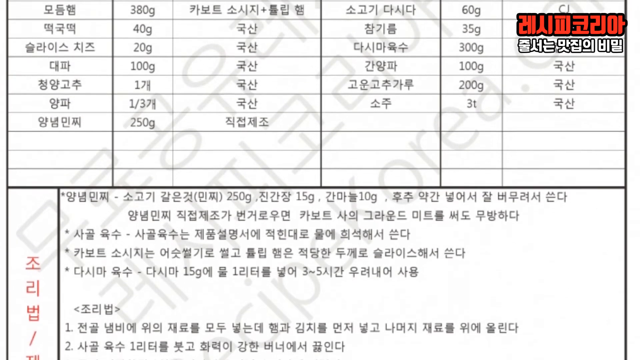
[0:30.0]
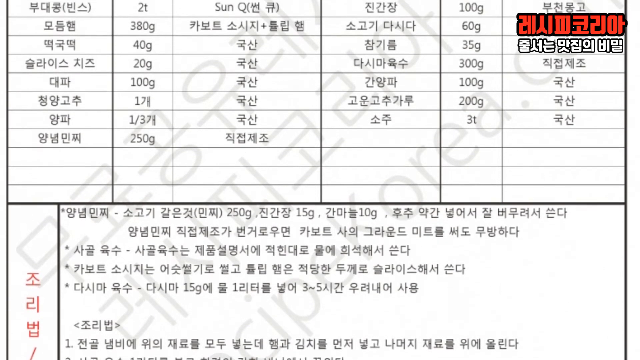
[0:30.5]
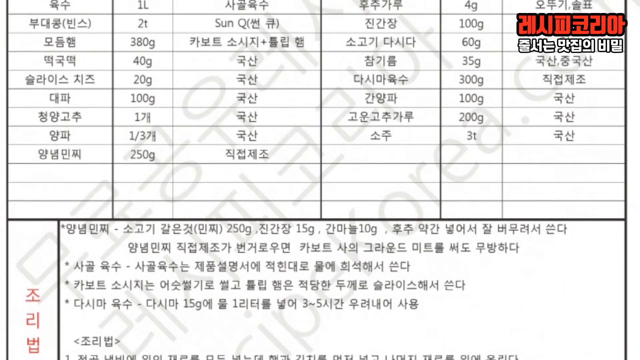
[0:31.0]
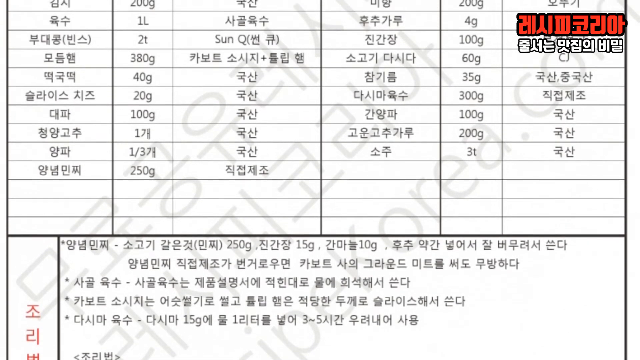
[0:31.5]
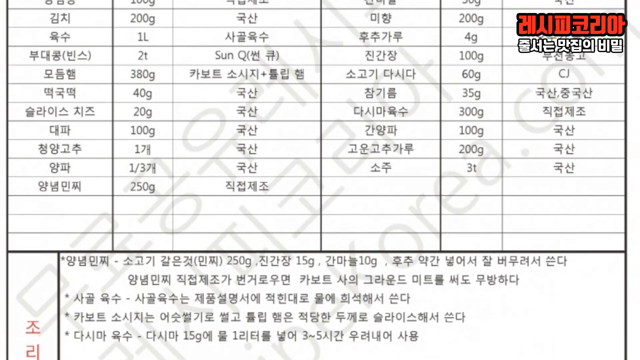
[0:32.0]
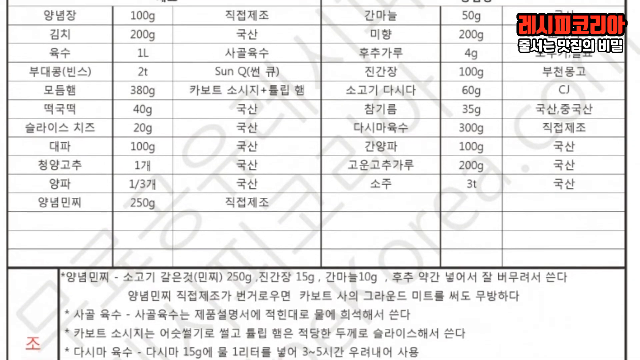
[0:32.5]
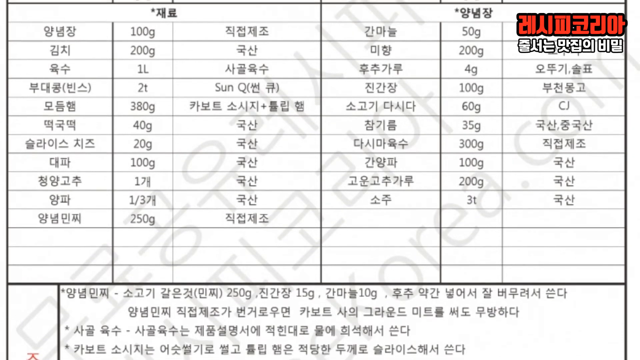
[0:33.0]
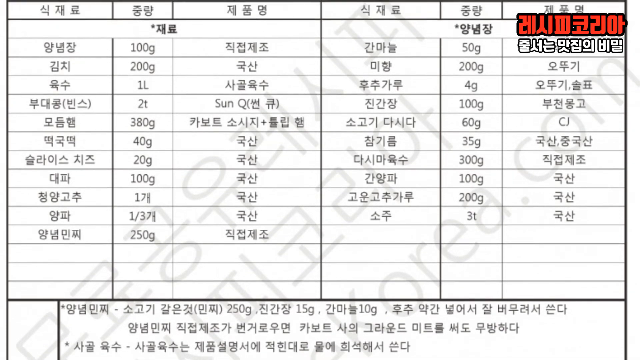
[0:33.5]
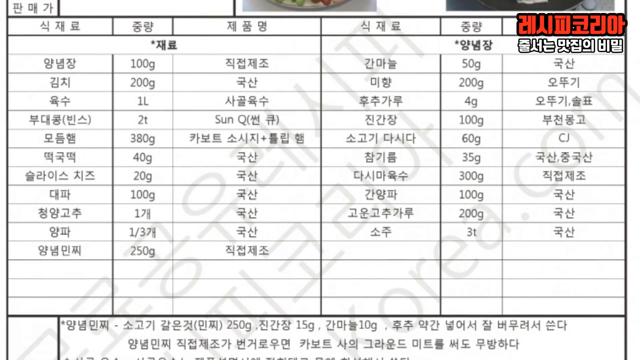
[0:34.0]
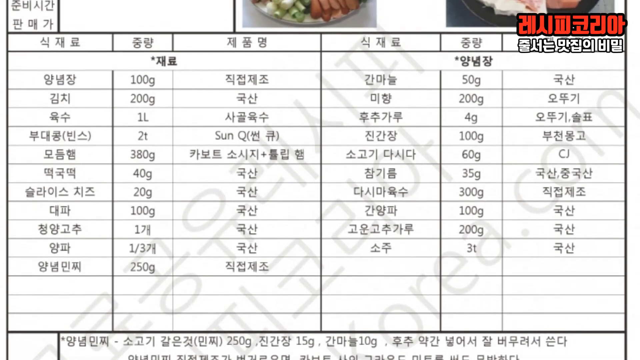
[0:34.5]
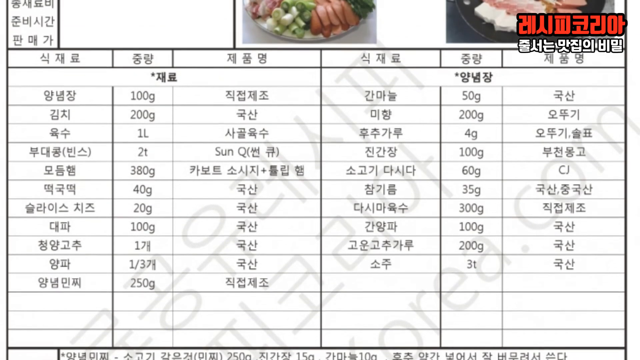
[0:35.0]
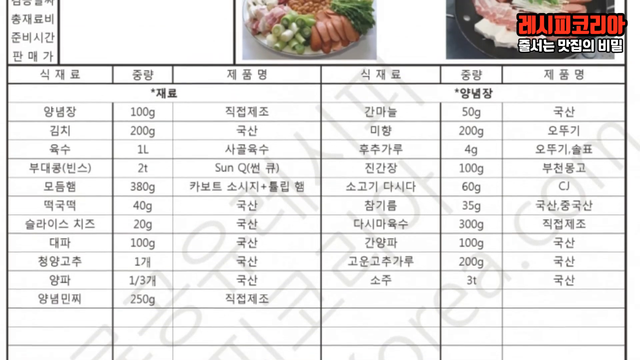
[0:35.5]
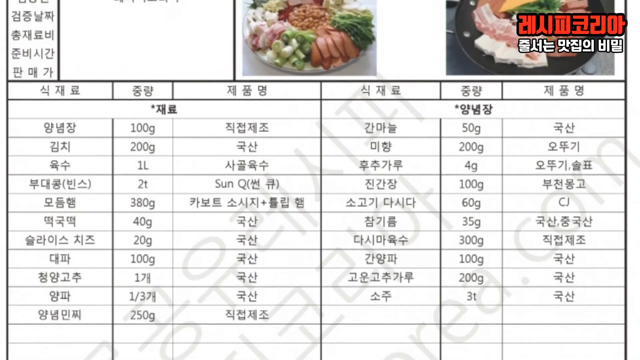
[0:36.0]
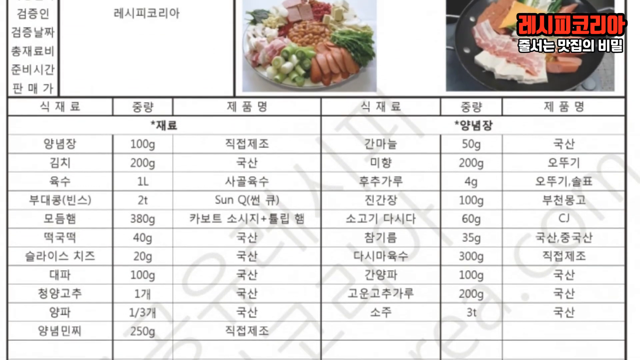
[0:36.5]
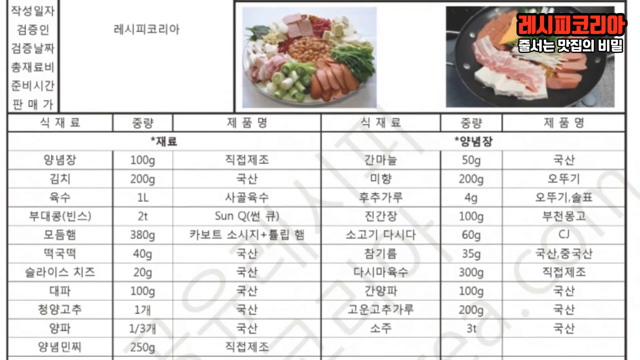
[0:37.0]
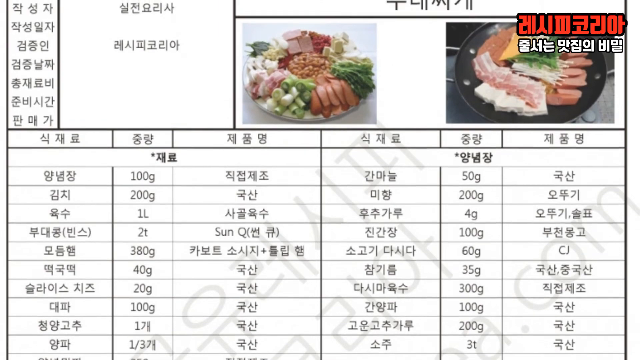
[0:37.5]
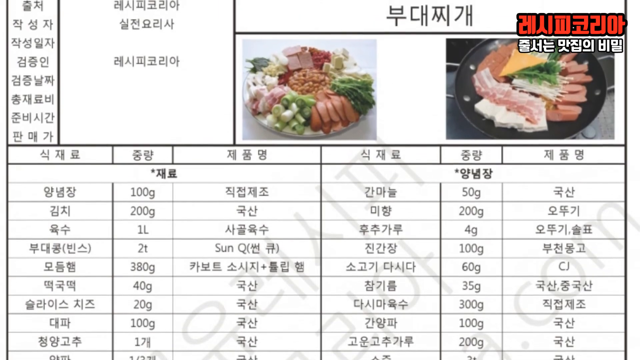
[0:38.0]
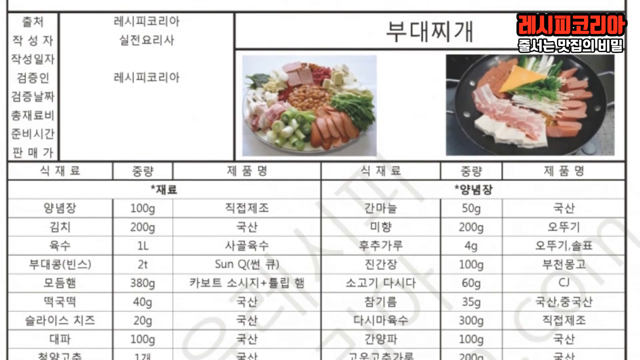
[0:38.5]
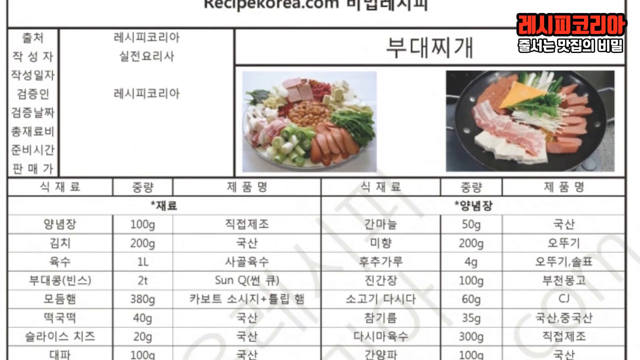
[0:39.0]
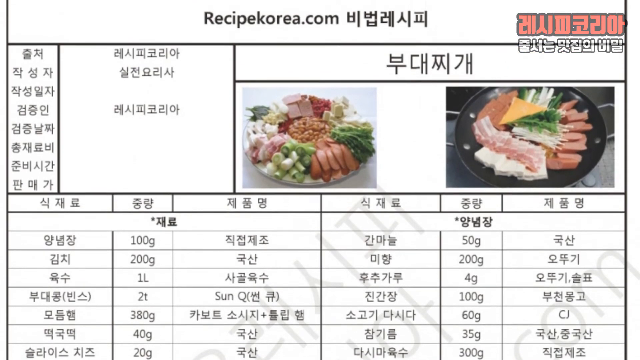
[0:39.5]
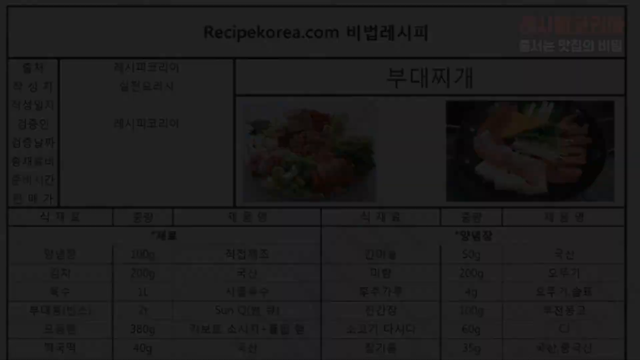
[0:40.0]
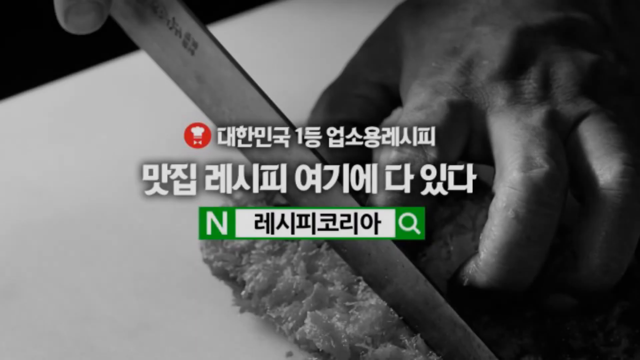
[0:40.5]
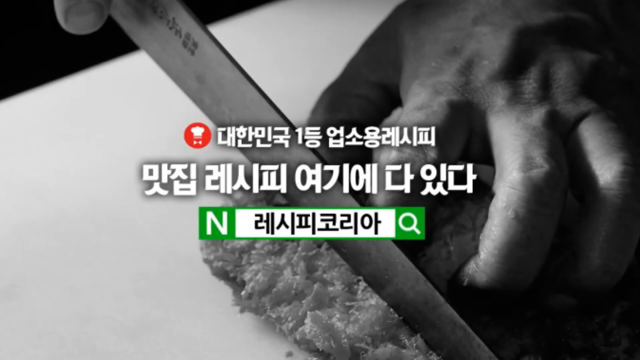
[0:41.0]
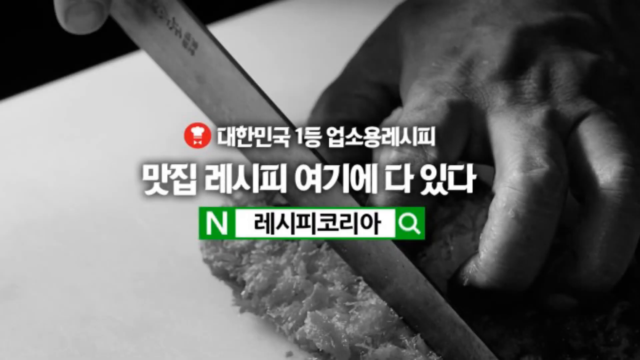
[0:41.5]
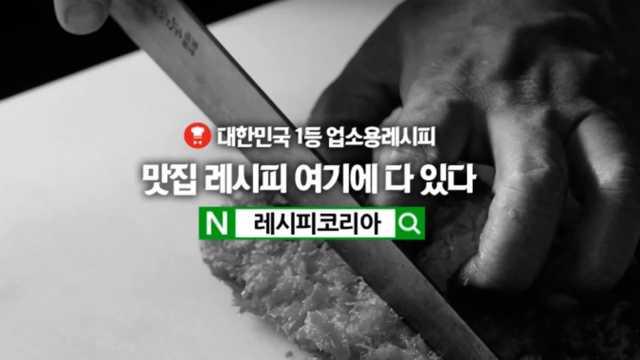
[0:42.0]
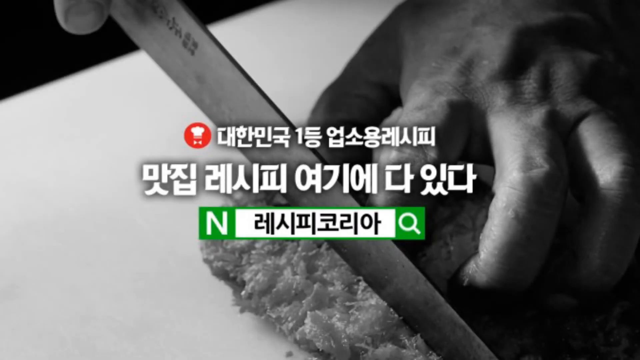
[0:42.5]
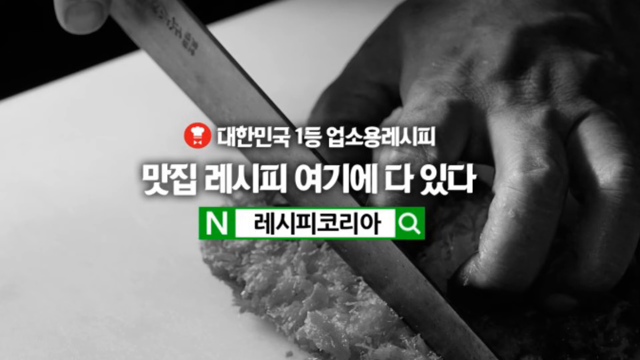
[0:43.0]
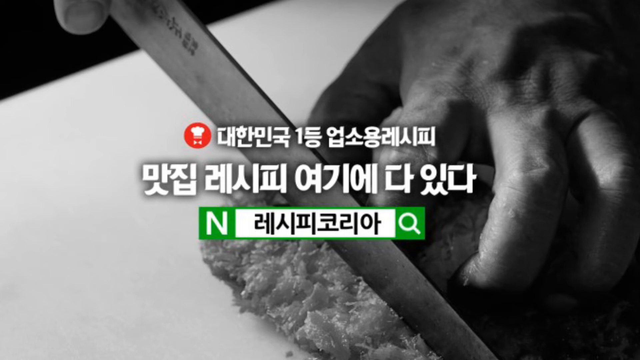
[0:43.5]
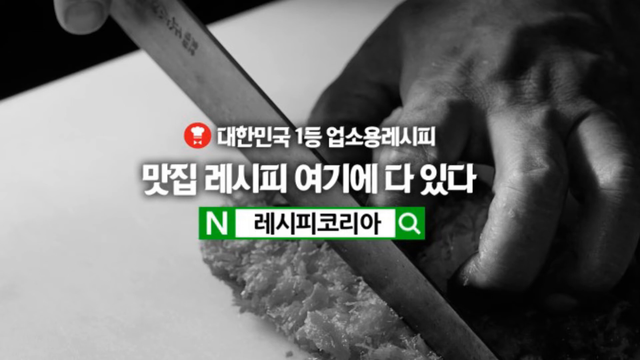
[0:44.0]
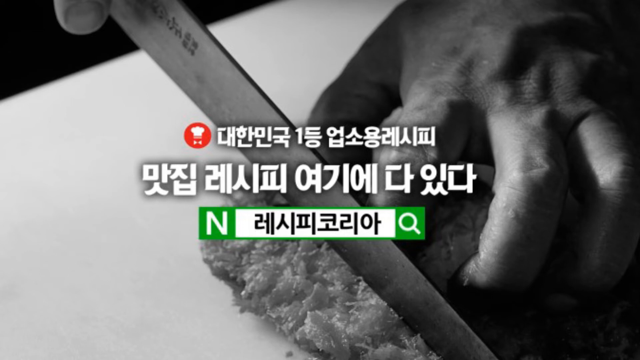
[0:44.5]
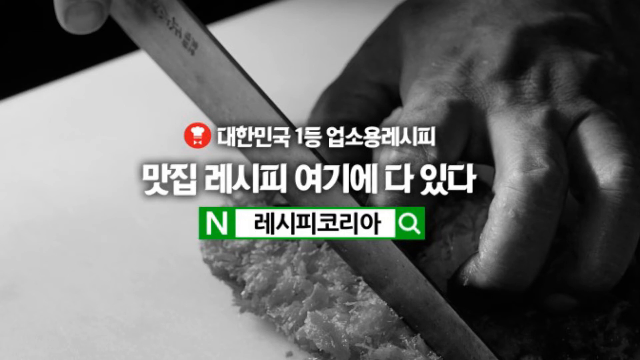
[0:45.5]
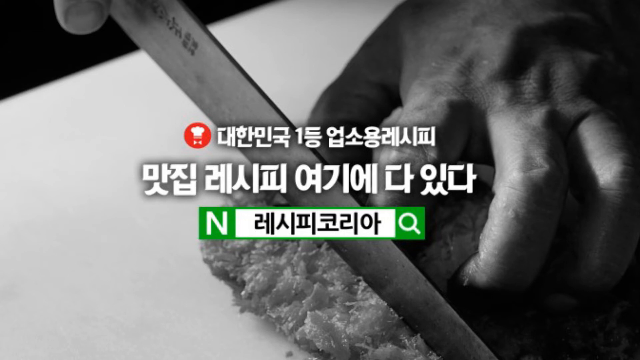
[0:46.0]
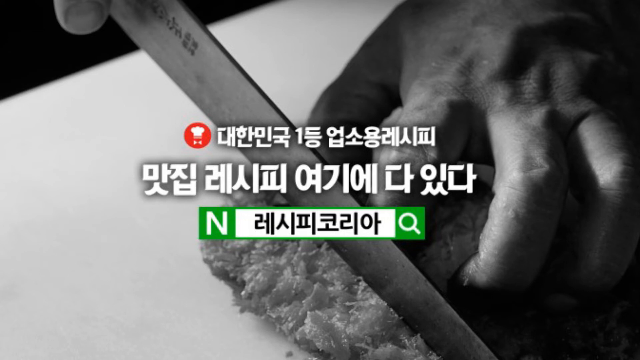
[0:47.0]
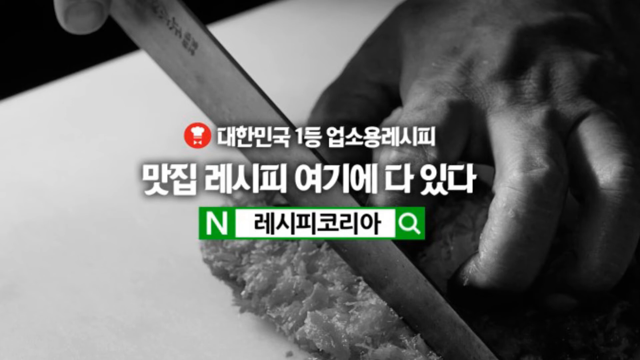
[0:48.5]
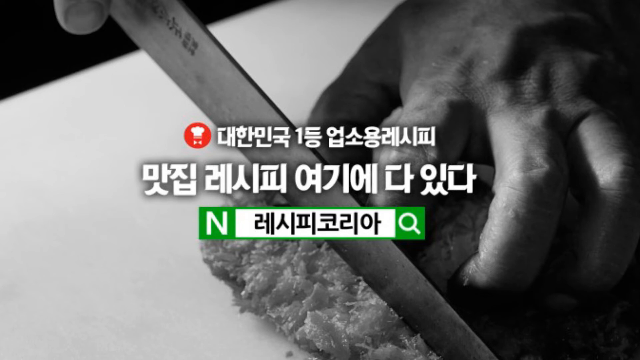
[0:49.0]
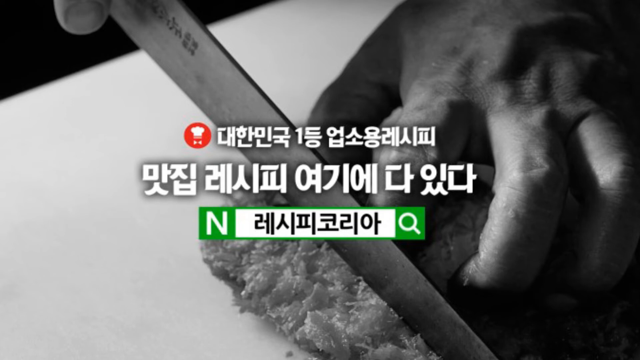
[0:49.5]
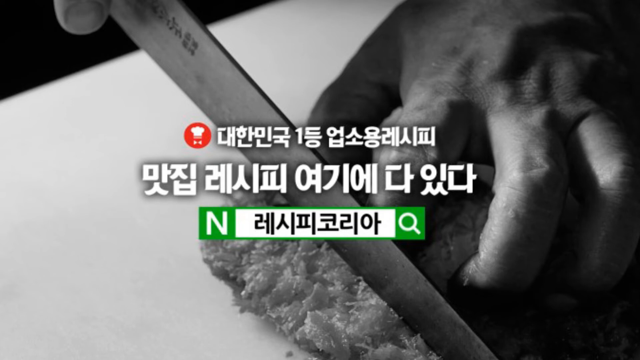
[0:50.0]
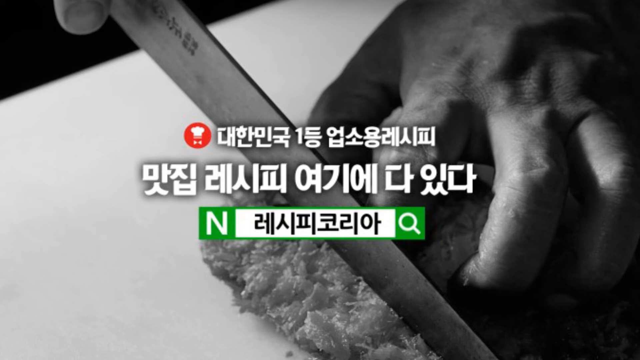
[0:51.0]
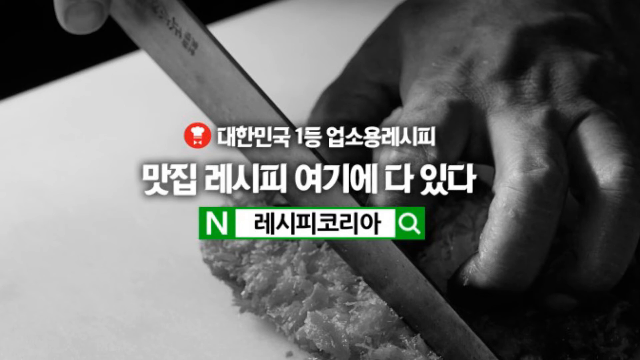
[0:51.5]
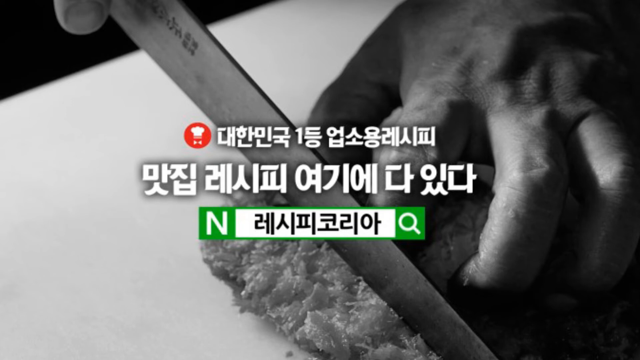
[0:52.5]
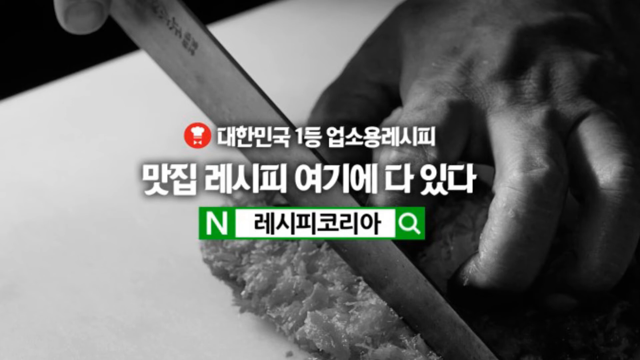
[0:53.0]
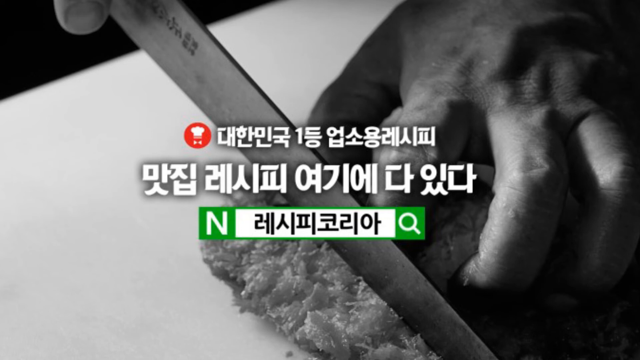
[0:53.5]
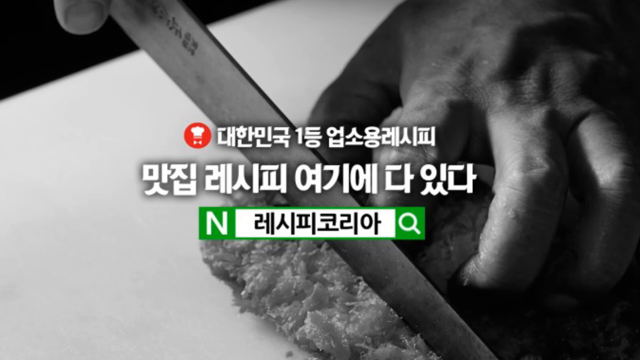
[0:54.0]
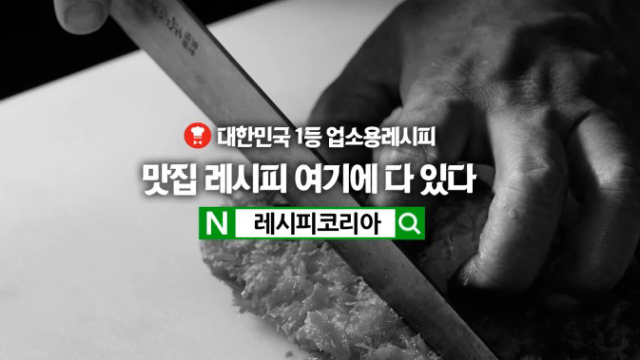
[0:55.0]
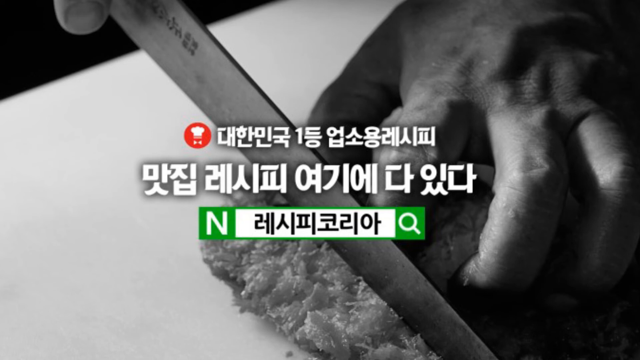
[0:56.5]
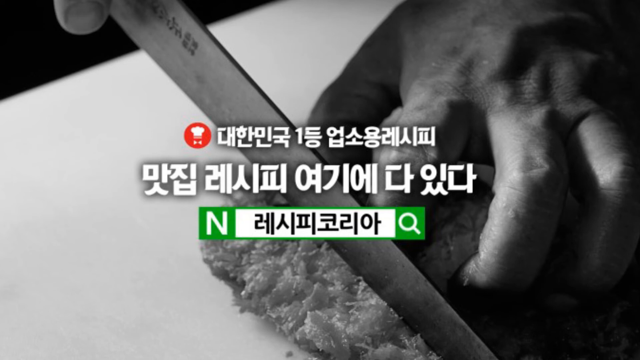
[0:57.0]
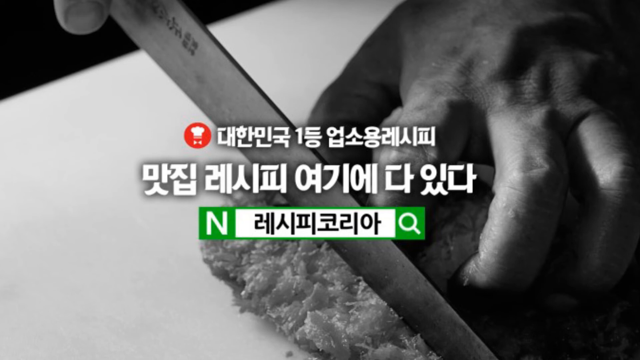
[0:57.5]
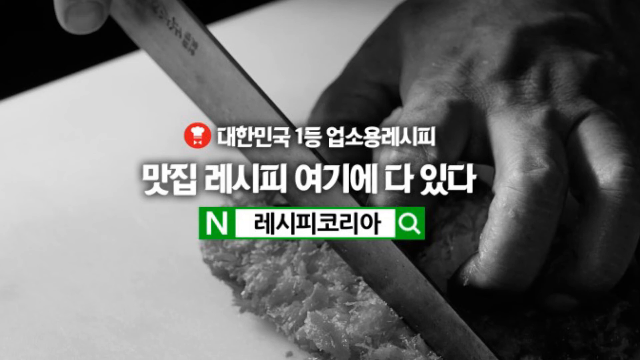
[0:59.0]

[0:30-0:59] The video continues on the text at the bottom of the price list, then scrolls up through the same content seen before. At the top of the screen is some text in a short column on the left, more text in a wider column to its right, and the two platters of food, presumably illustrating foods found in the price list. The scrolling through the prices continues until the screen changes to a final scene: a still picture of one hand holding a piece of meat while the other hand slices through it with a very sharp chef's knife. There is no motion; it is probably an advertisement for cooking. What appears to be a search box is in the third line of the text, with an exclamation point to the right and Korean characters inside. The picture is black and white, the text is red and white, and the search box is green and white.